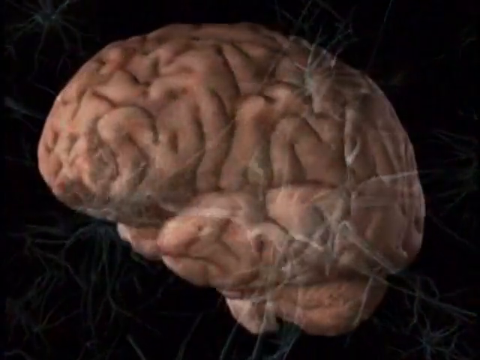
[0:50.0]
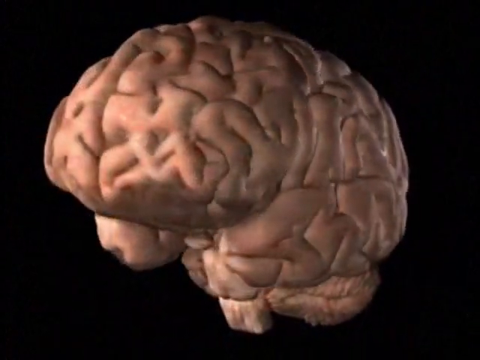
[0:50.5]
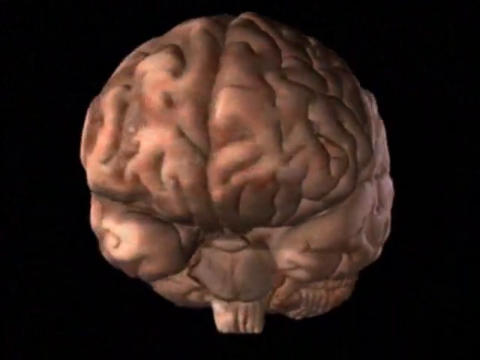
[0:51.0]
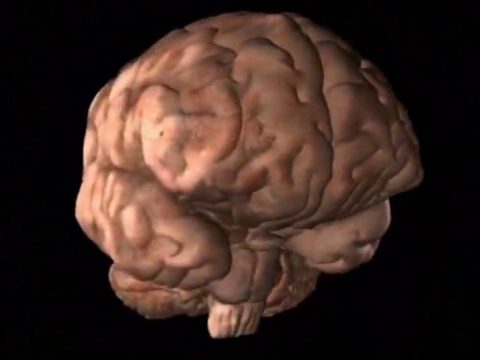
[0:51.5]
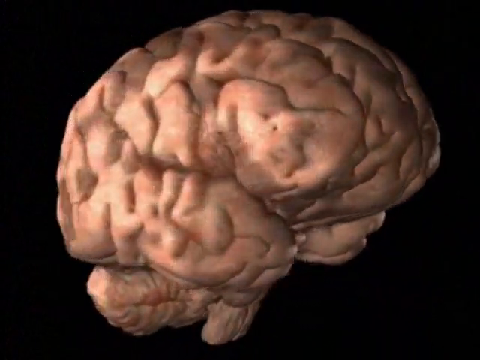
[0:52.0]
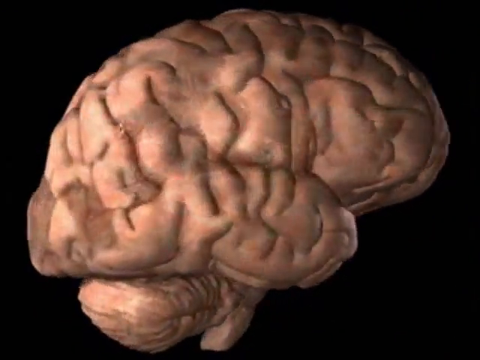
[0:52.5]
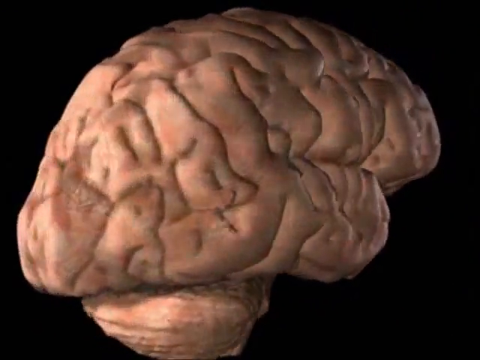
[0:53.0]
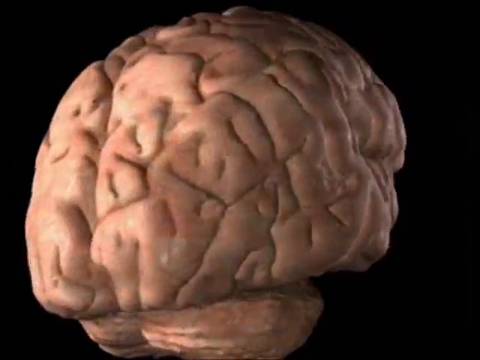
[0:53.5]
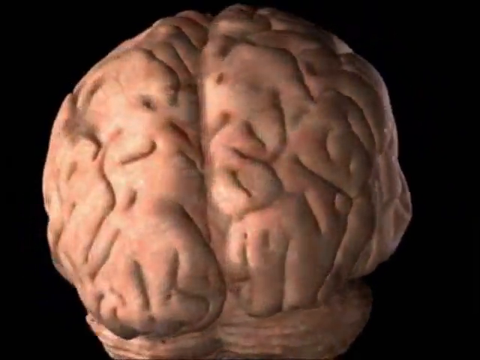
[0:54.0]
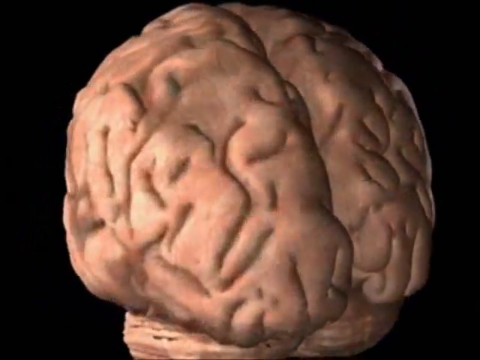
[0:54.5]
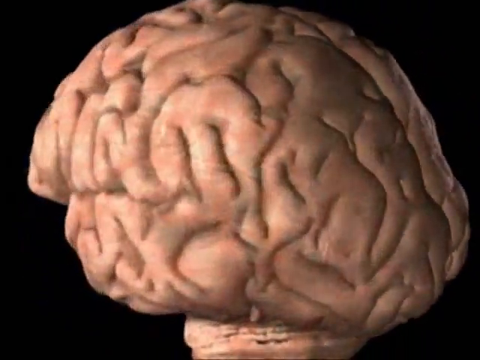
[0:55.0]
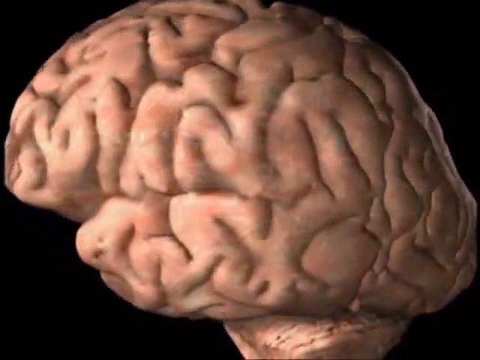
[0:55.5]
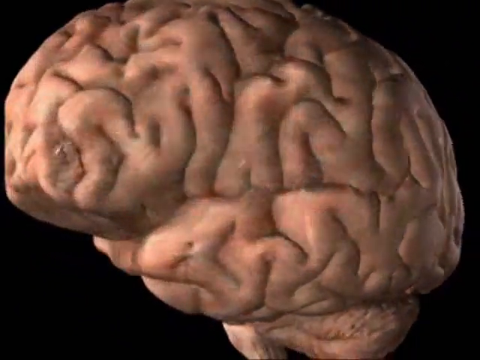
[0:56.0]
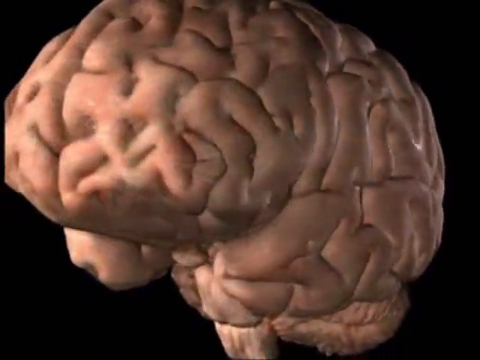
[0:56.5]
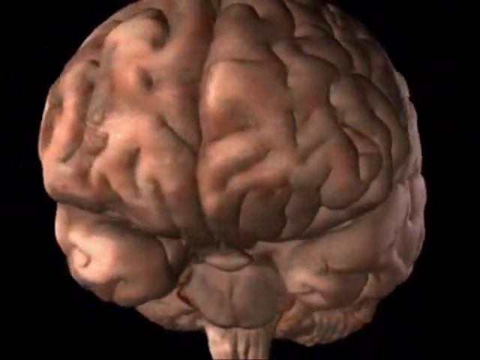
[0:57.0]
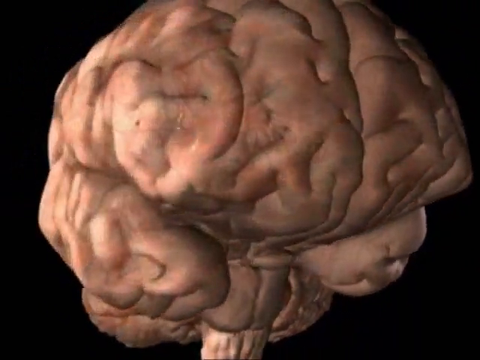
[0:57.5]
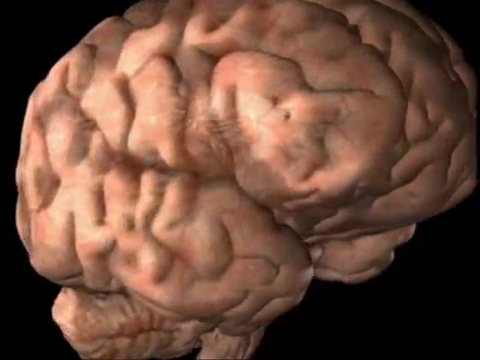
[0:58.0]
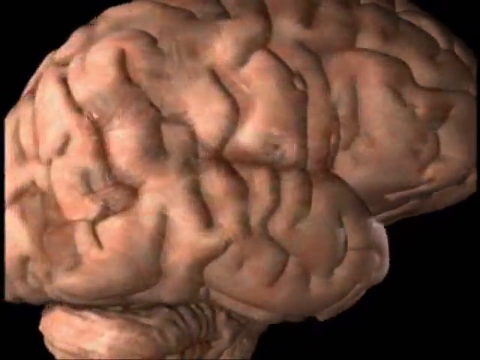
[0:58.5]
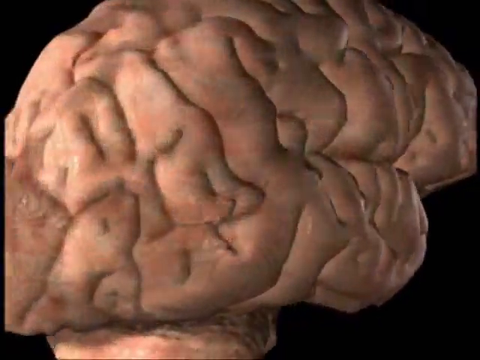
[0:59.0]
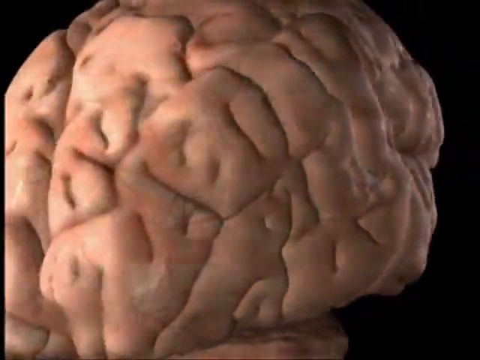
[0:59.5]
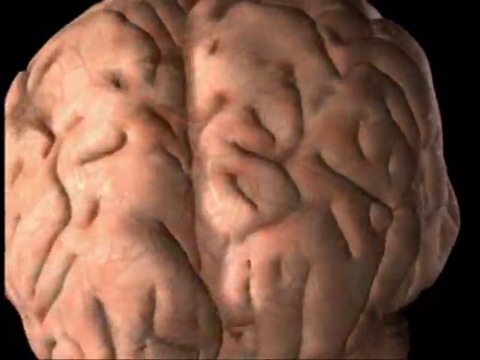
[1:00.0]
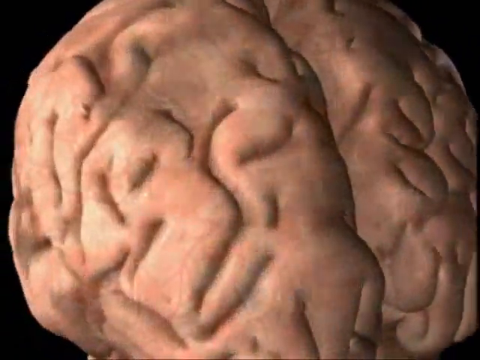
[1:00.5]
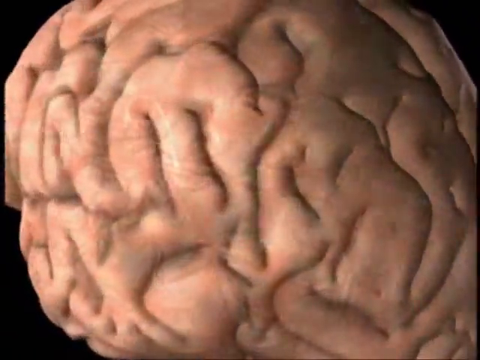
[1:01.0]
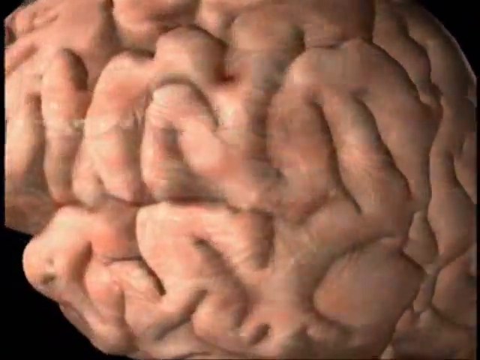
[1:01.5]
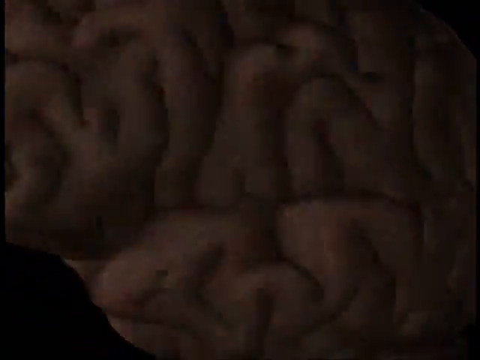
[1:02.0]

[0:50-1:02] A 3D human brain, illustrated mostly in pink with darker pink areas, is shown against a black background. The brain is seen from its left-hand side and turns slowly counterclockwise. As it spins, the two lobes become clearly visible, and at the bottom the point where the brainstem comes out can be seen. The camera moves closer as the brain continues to spin counterclockwise, with the lobes visible as it goes, showing the front, the right side, the back, and the left side.